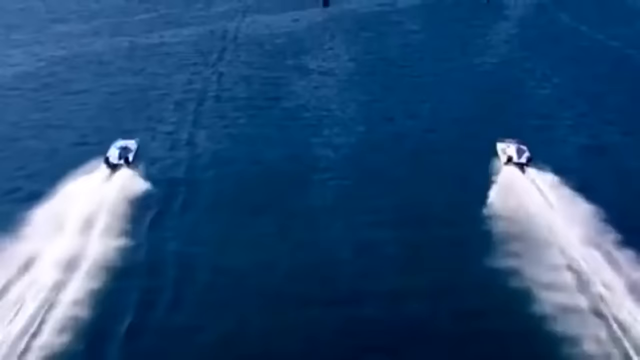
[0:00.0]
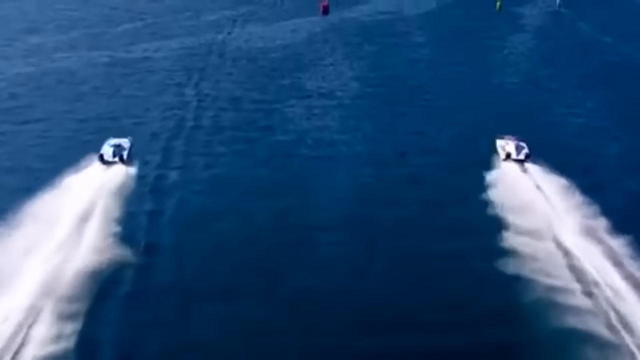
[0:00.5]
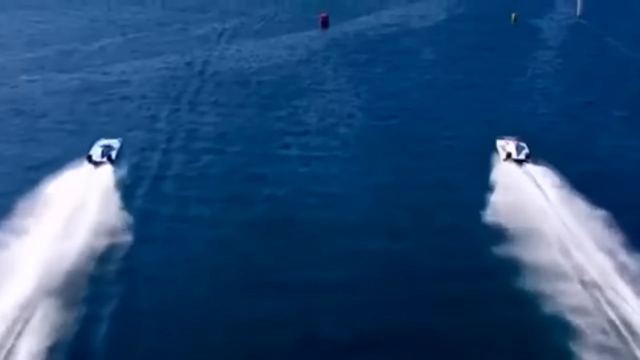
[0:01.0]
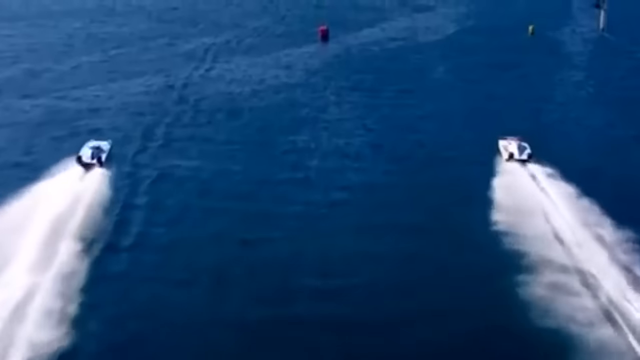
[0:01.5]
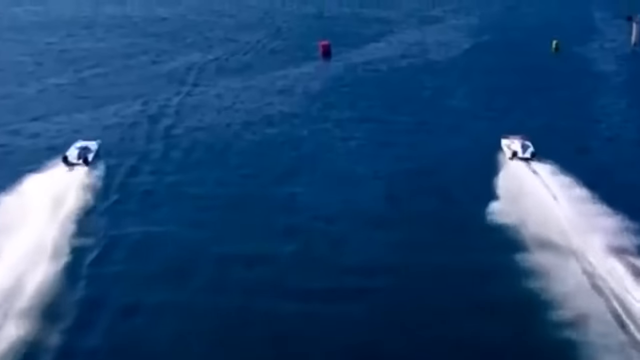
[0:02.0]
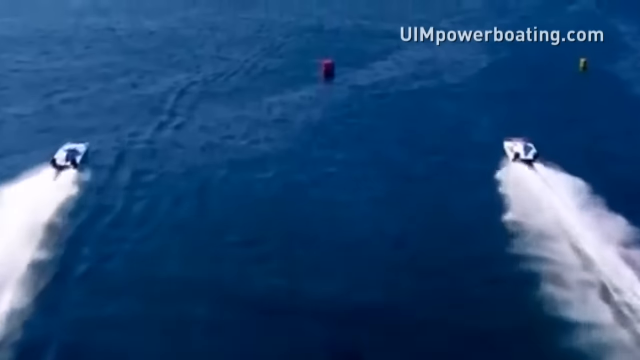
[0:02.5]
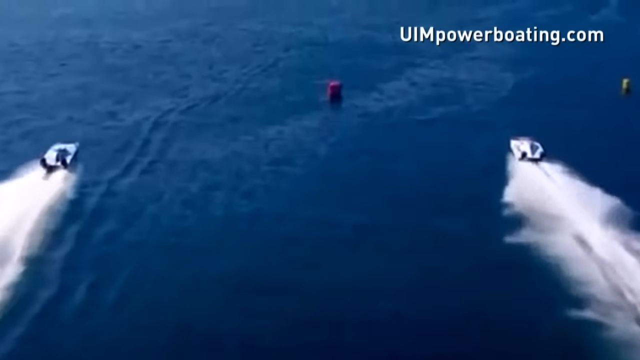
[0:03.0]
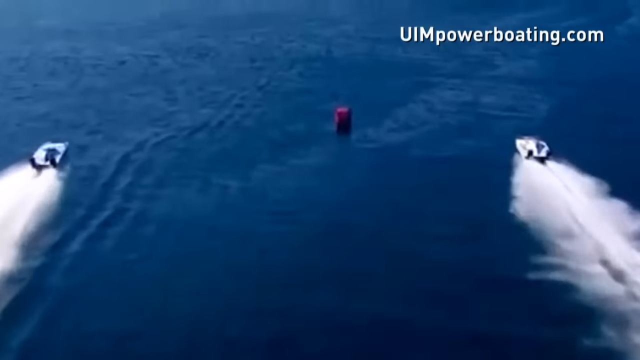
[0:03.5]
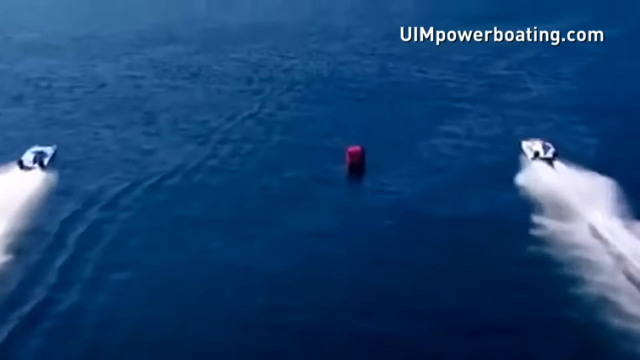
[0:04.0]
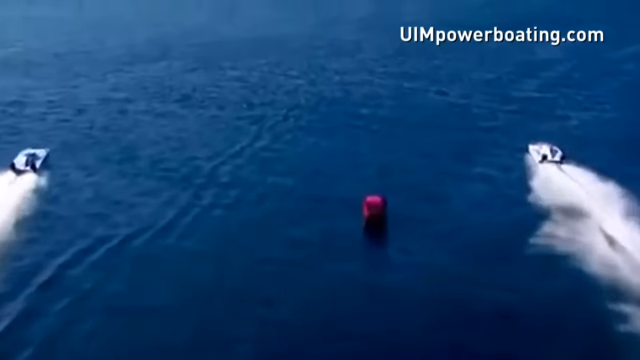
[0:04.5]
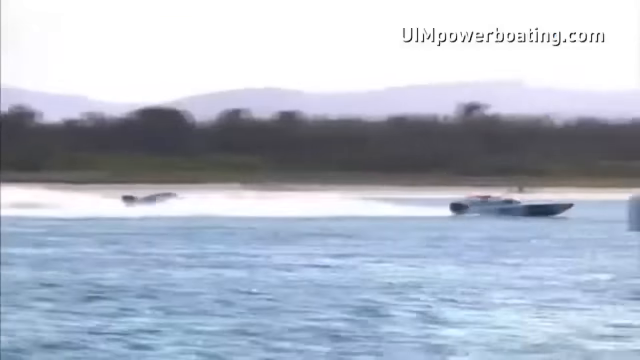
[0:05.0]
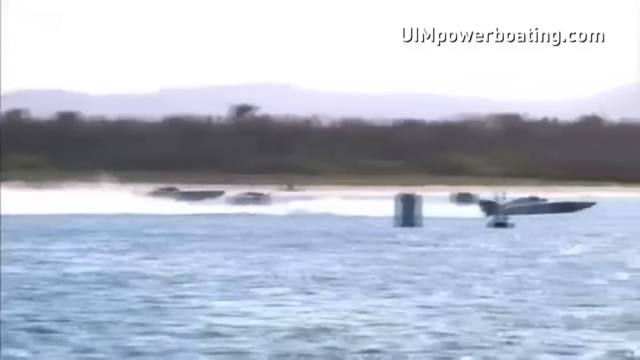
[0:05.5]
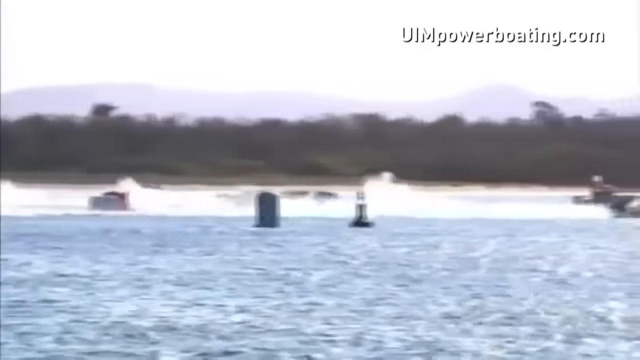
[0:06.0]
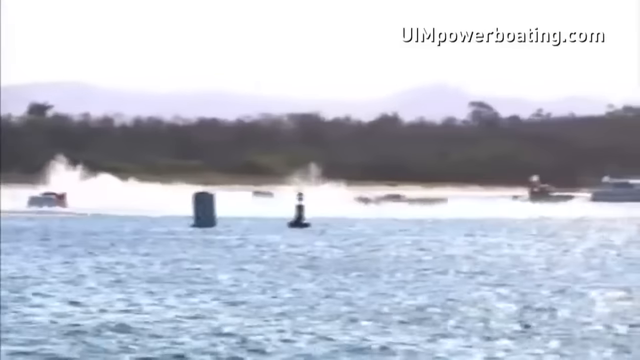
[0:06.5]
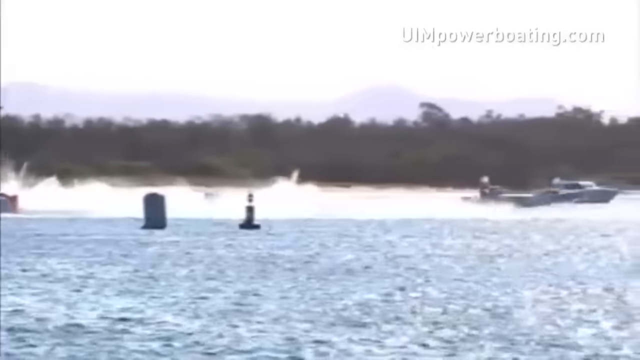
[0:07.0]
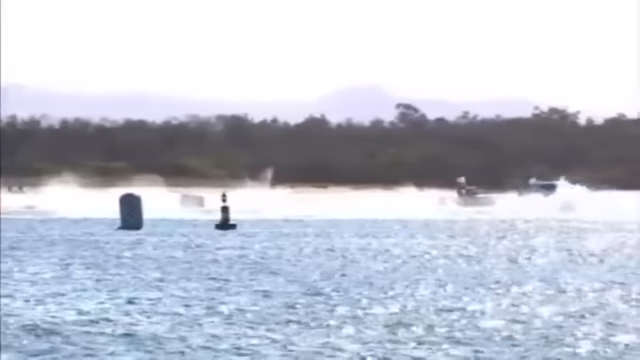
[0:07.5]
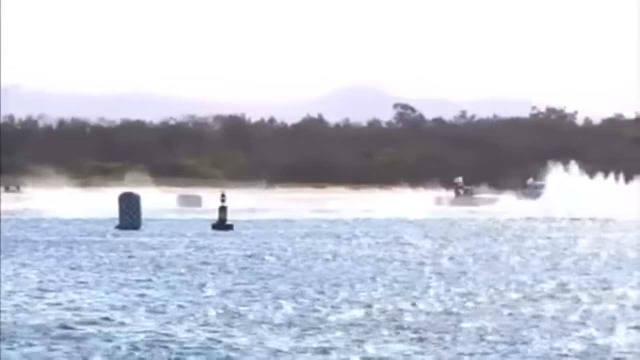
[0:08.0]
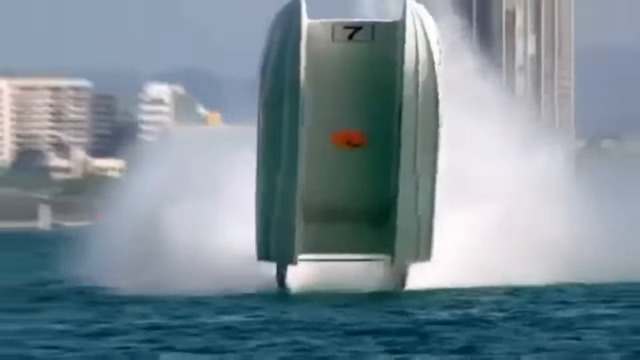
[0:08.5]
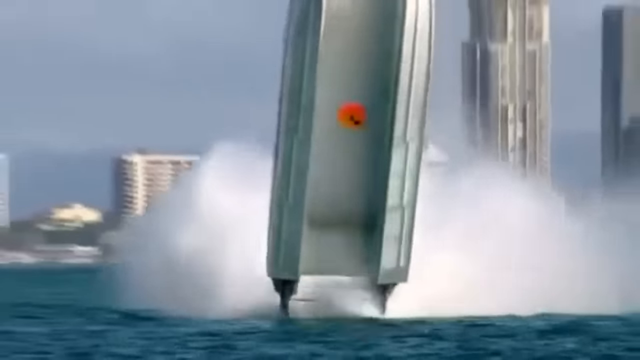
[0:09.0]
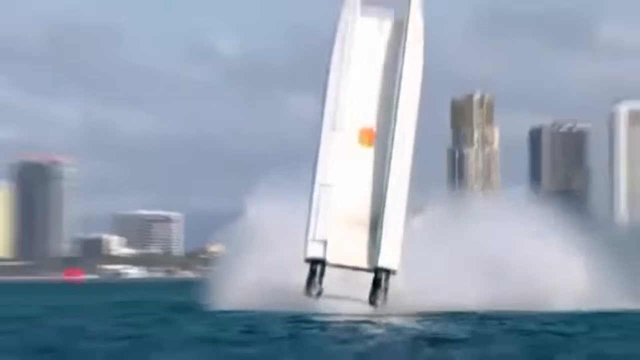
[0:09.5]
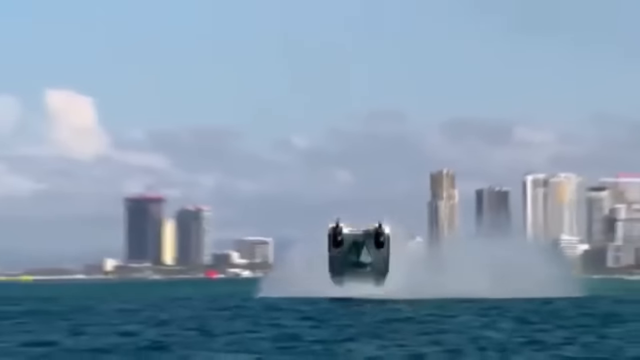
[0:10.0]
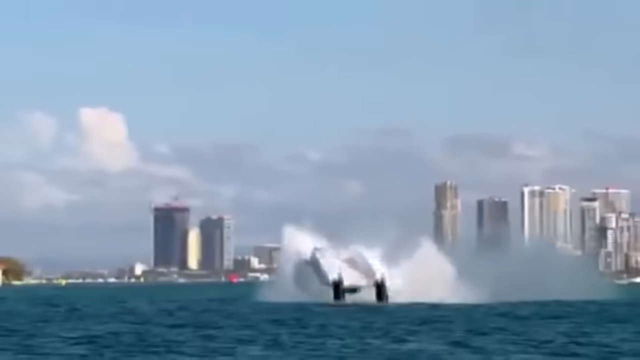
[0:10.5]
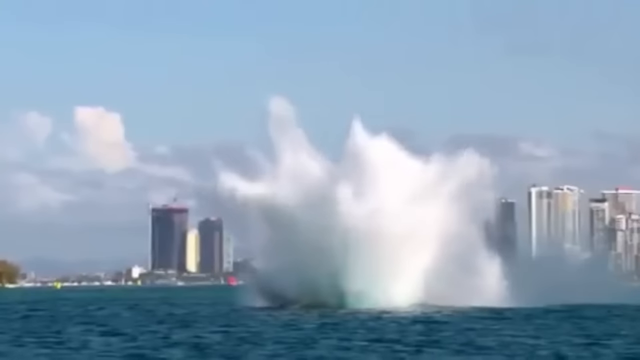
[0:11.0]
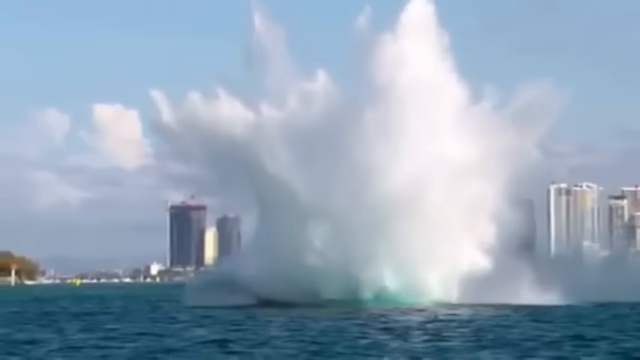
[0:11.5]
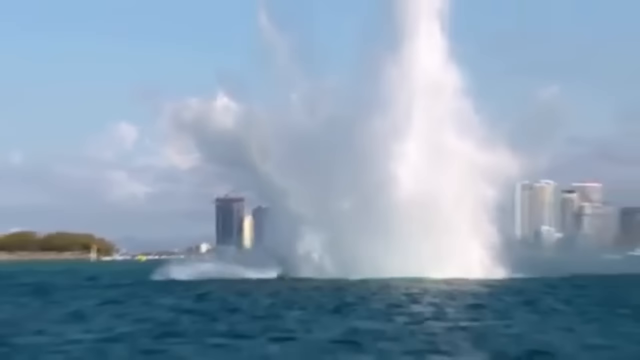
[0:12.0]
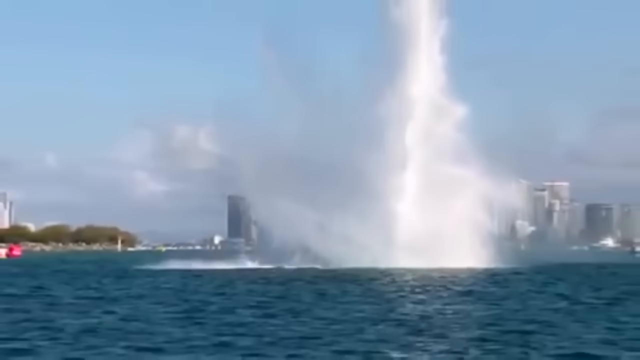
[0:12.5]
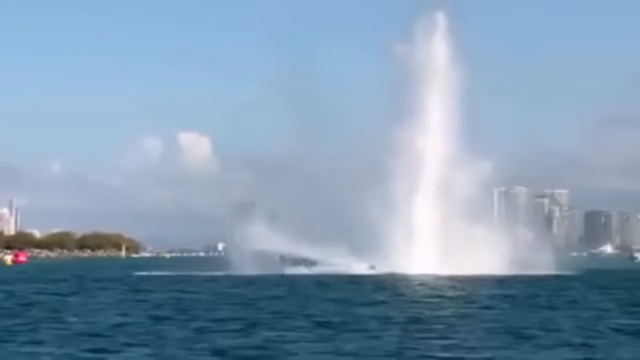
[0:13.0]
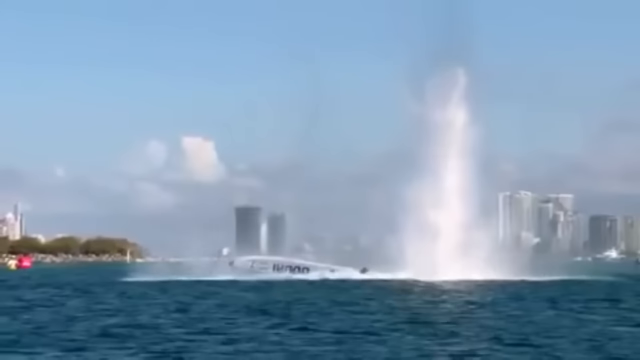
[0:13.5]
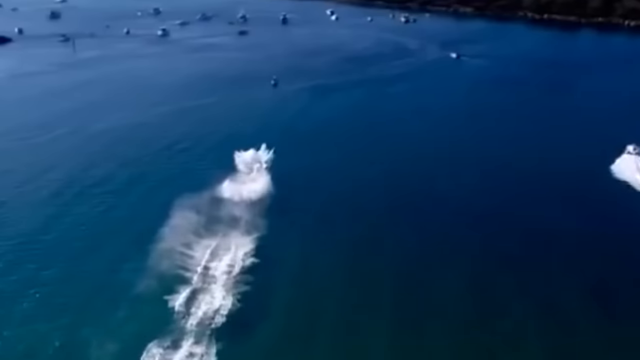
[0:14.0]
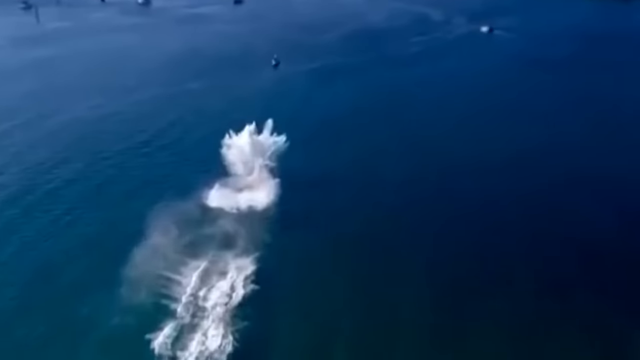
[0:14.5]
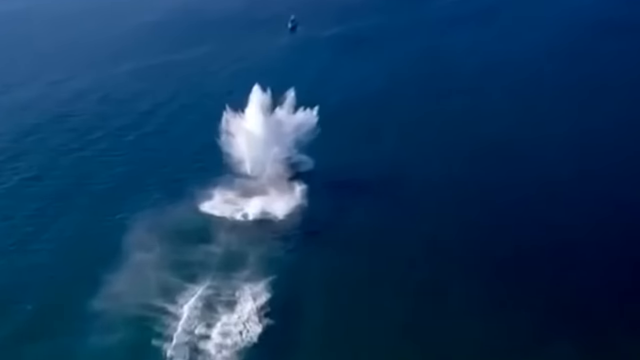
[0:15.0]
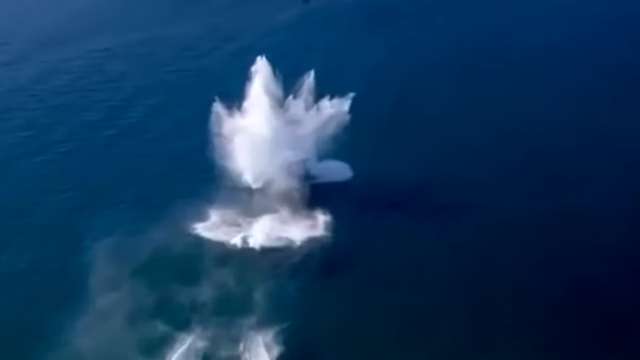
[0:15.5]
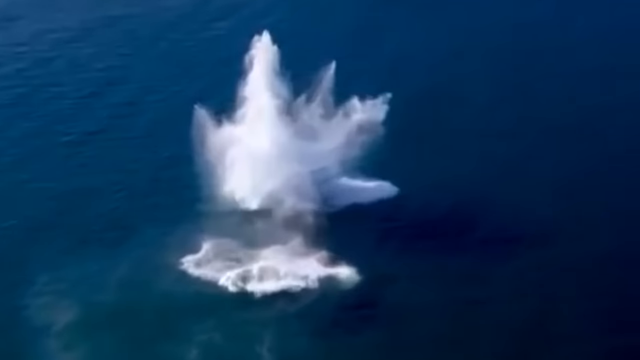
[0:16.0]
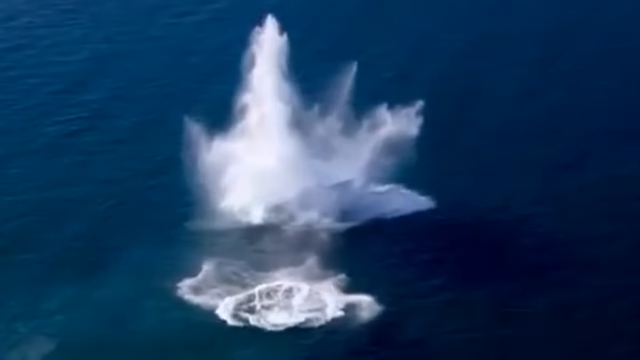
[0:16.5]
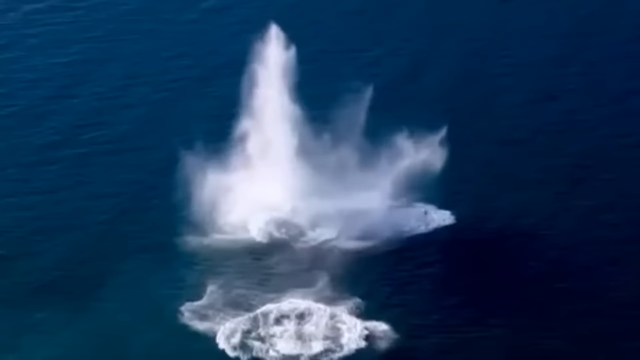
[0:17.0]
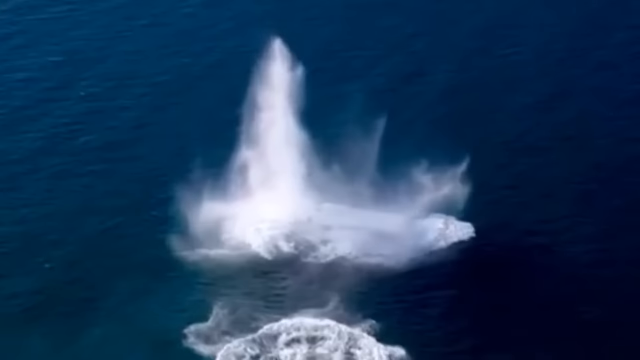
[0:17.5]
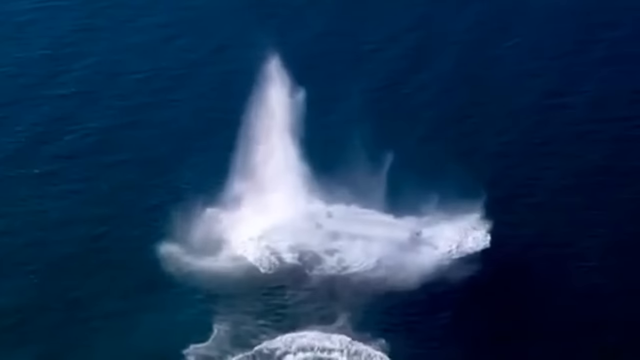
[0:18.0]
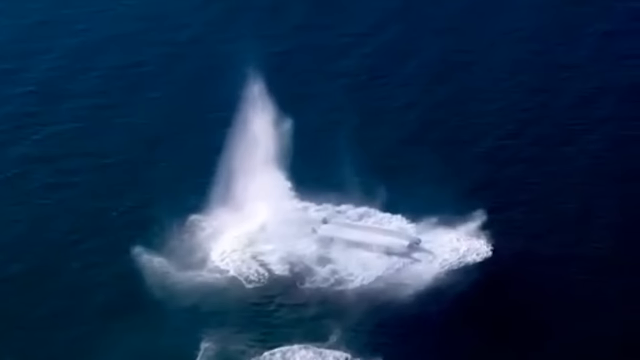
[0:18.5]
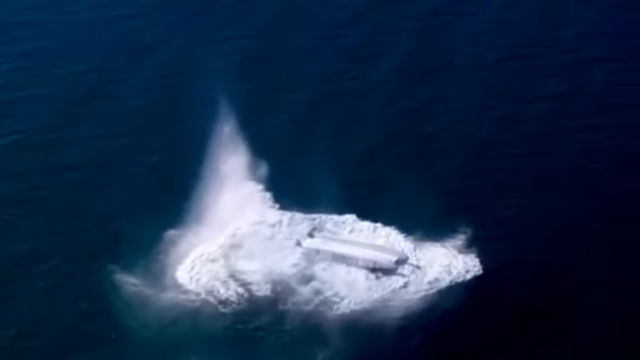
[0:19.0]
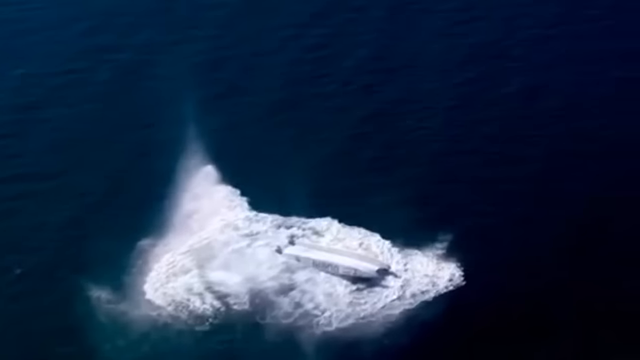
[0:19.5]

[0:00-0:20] Two speed boats, one on either side of the screen, race across the surface of a mostly calm lake. Both boats are white or light in color, and large wakes come out of the back of each. They travel straight across the water, passing a red buoy in the middle between the two crafts. In the top right corner of the screen is a "uimpowerboating.com" link. The camera switches to a view from water level, looking at the sides of the boats as they race past the camera. Next, a head-on view shows one of the boats start to gain lift off the surface of the water before violently flipping and landing upside down on its roof. The boat slams on its nose before hitting its tail and coming to rest in a giant splash of water.